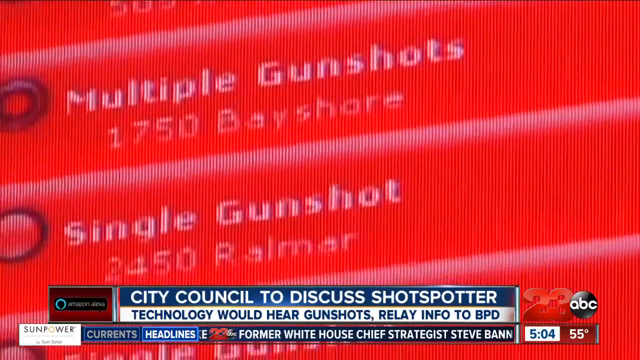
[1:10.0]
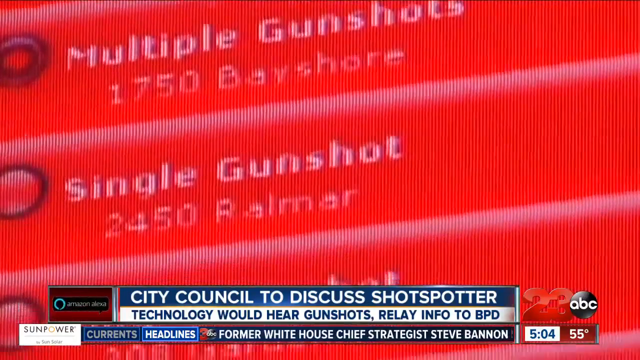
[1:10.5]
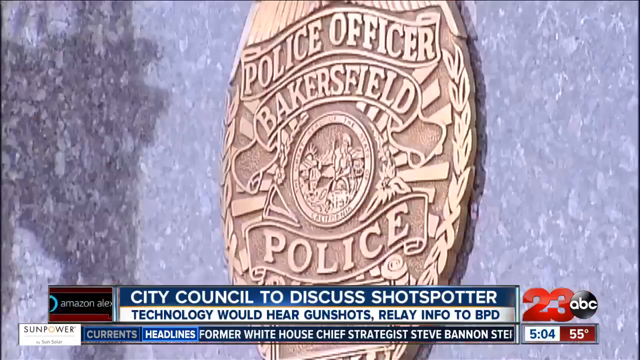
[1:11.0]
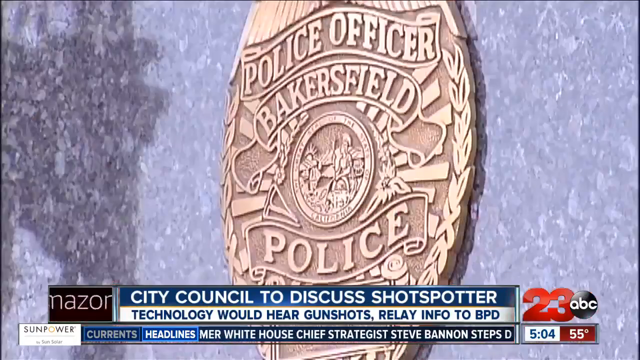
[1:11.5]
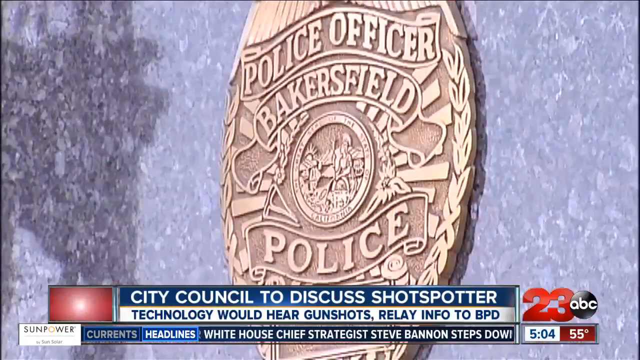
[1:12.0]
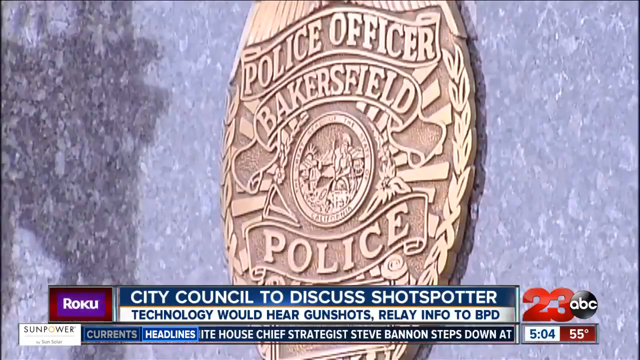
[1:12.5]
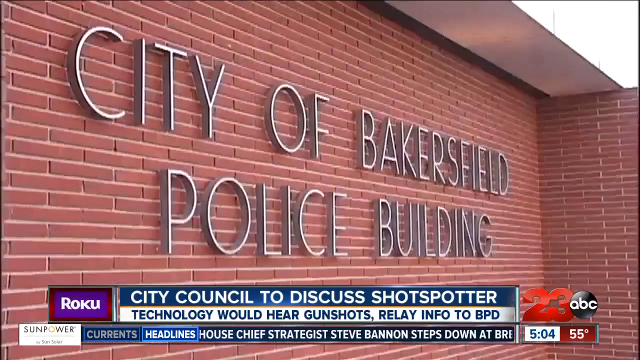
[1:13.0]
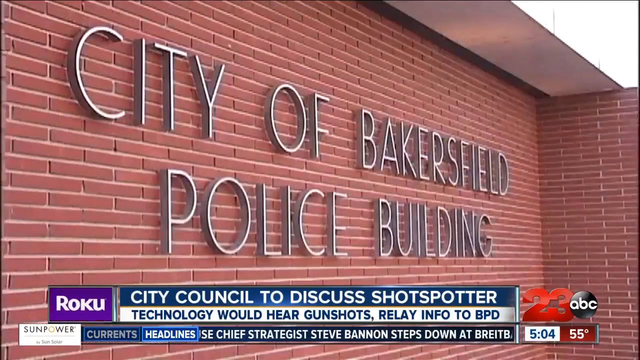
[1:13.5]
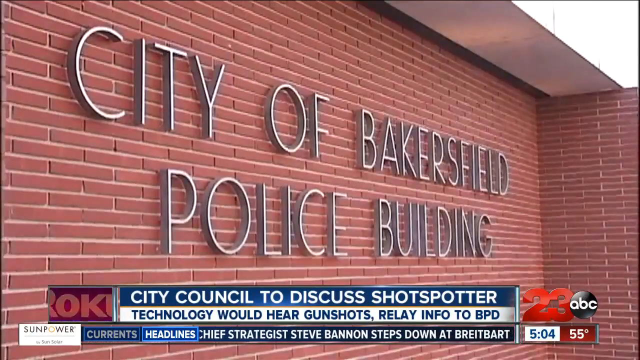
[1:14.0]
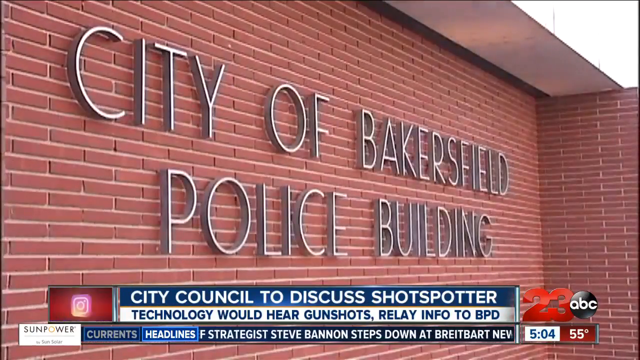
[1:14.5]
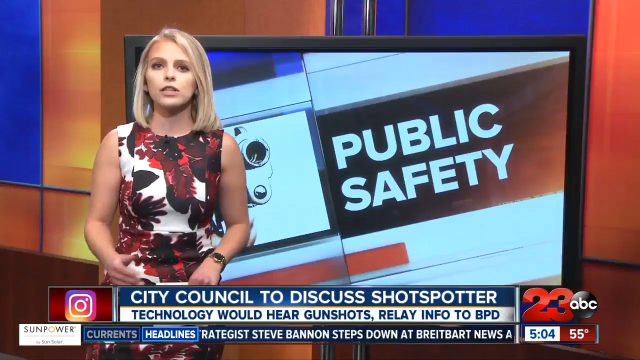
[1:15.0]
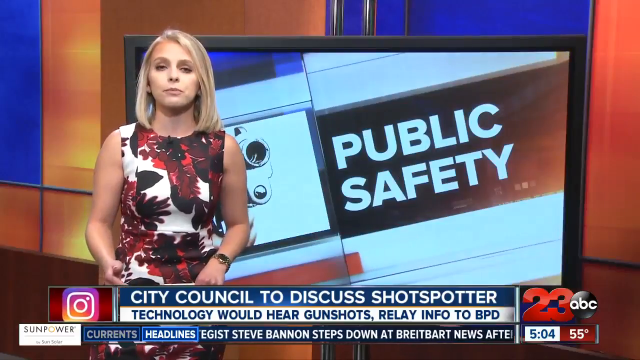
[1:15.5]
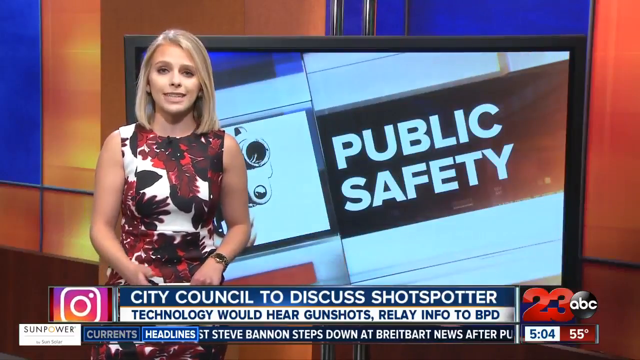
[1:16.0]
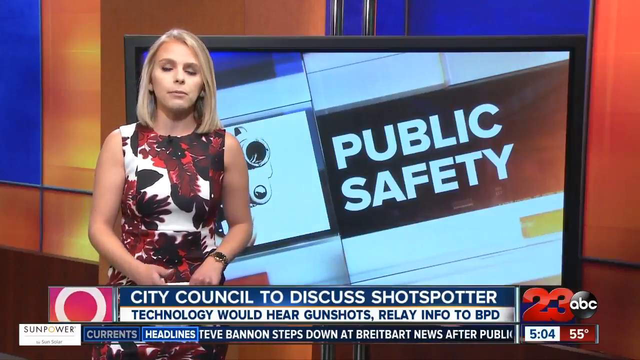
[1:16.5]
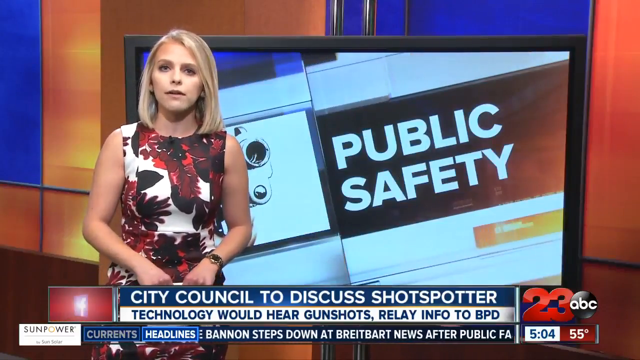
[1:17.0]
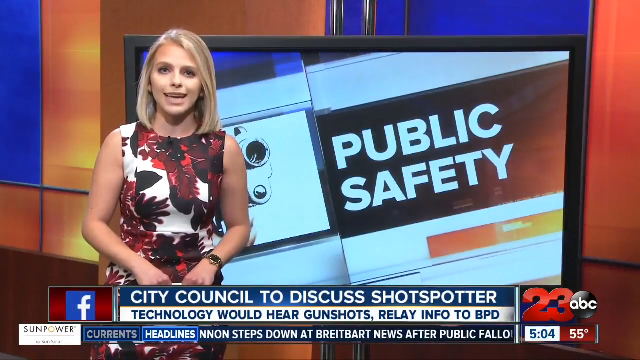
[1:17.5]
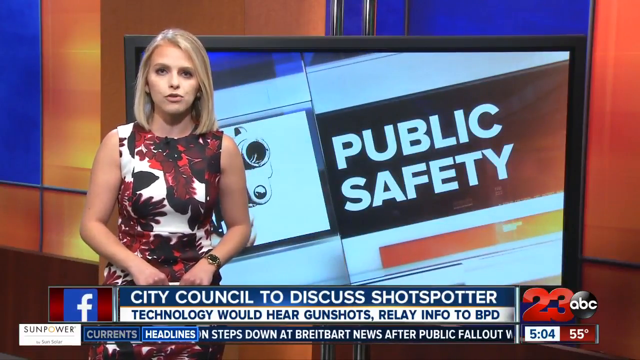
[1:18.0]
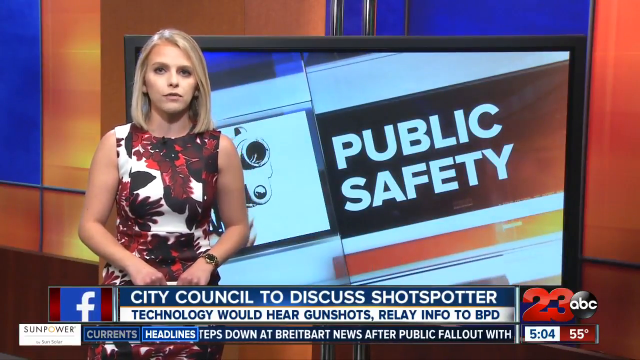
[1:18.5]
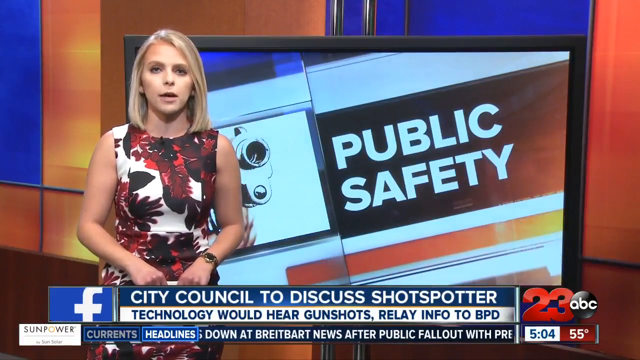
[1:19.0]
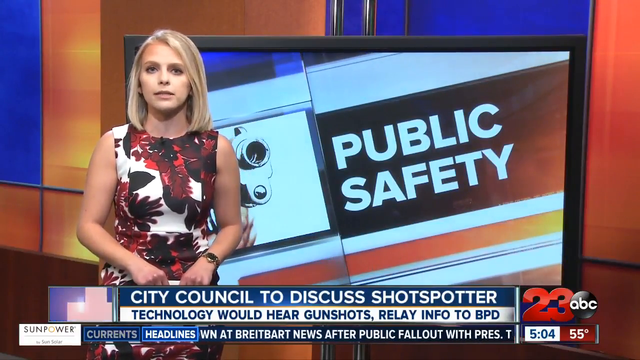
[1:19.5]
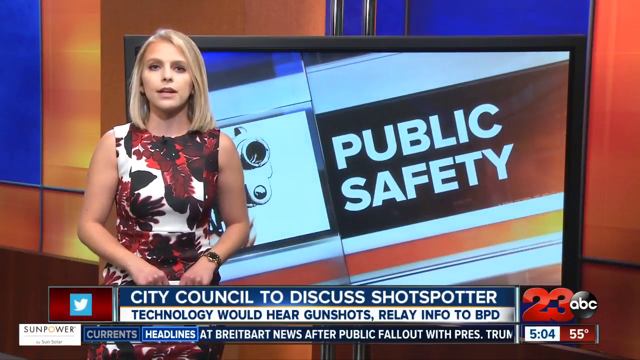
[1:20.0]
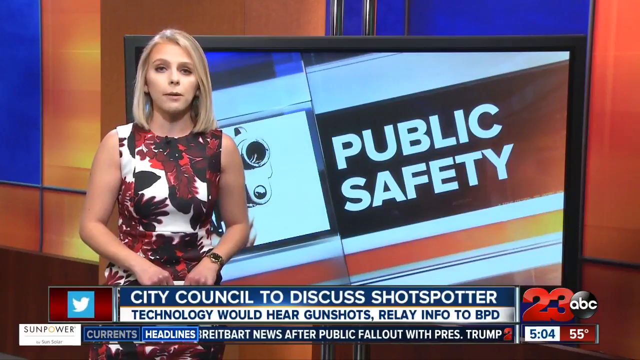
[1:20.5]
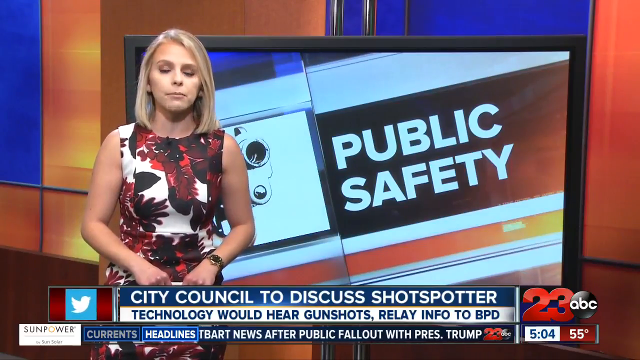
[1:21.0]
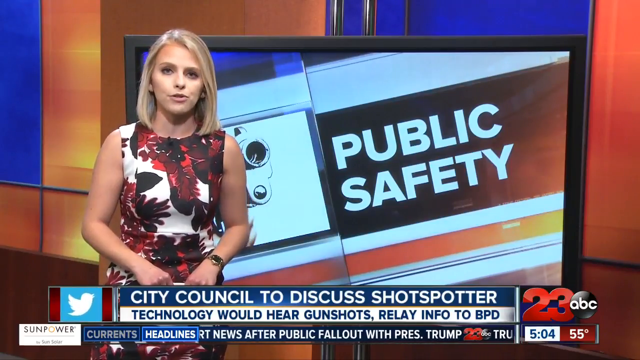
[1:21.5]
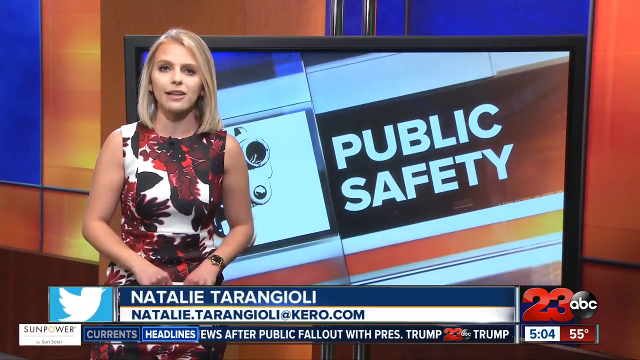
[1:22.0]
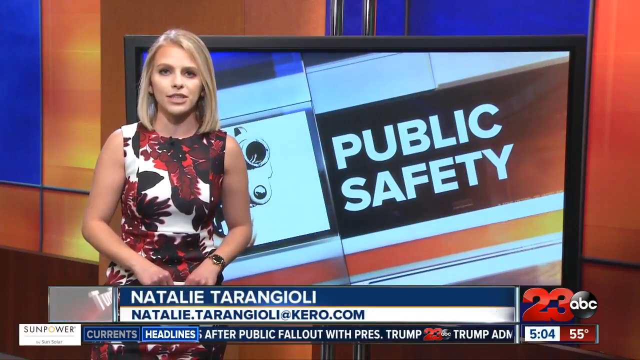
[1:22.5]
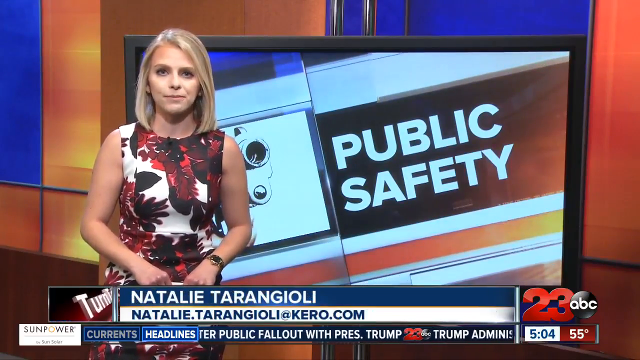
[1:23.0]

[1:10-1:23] More of the gunshot labels are zoomed in on. The video cuts to views of the city and the Bakersfield police building, then back to the woman presenting the segment, who has the same hairstyle and dress. Throughout this segment, Instagram, Facebook and Twitter logos in the bottom left kind of zoom in and fly all over the place, along with a Tumblr logo. Near the end, text at the bottom says "public follow with president trump."